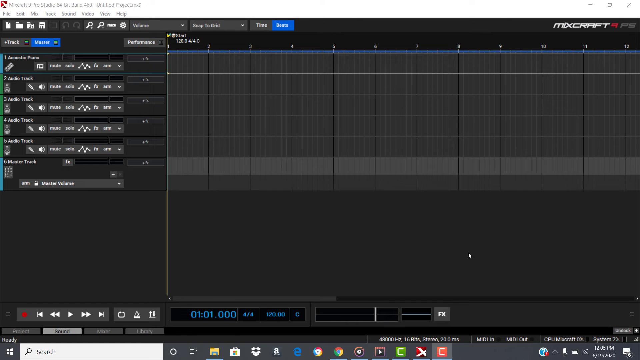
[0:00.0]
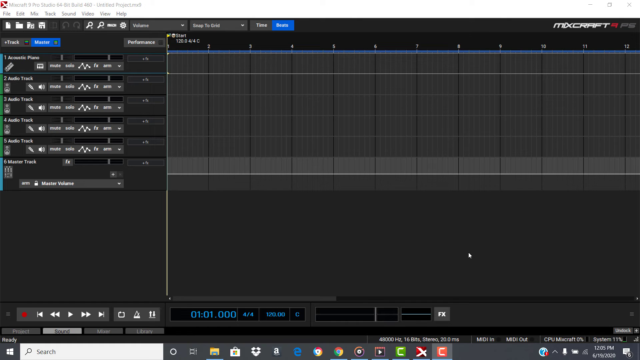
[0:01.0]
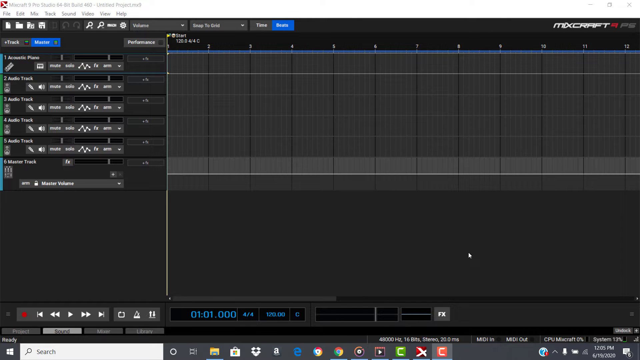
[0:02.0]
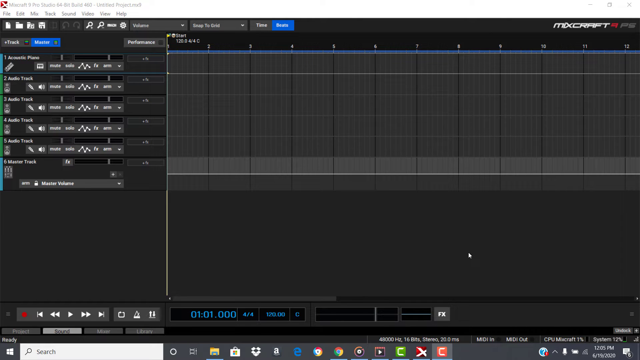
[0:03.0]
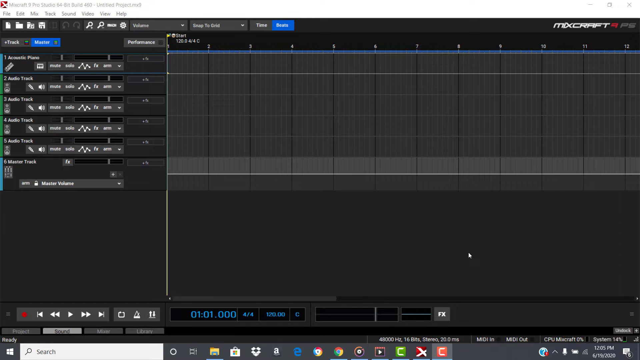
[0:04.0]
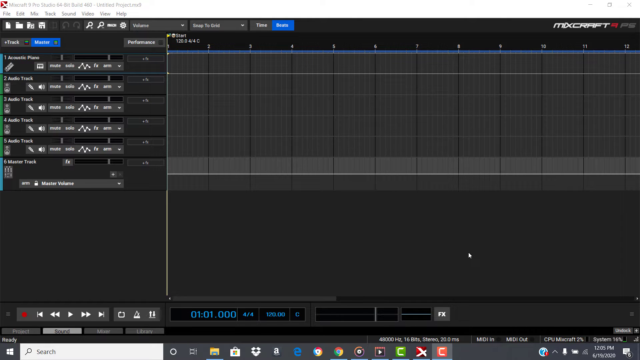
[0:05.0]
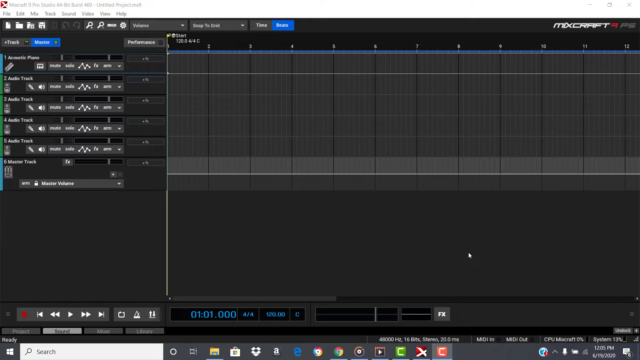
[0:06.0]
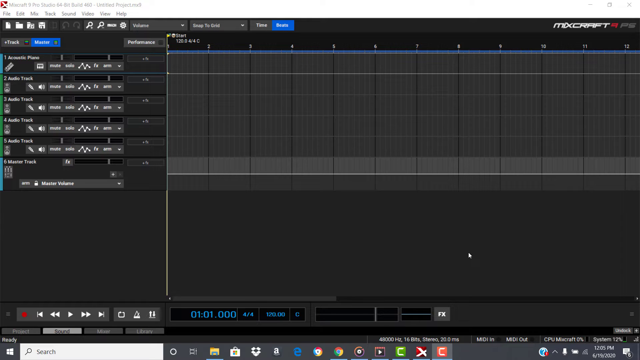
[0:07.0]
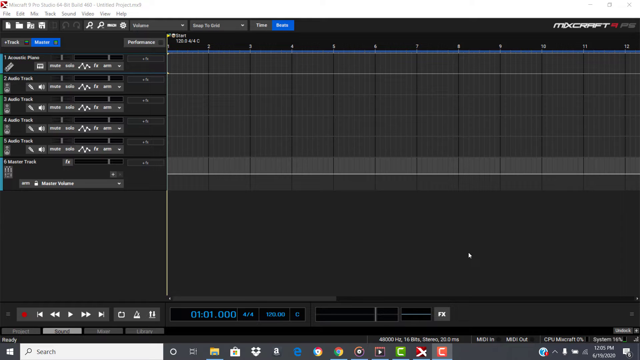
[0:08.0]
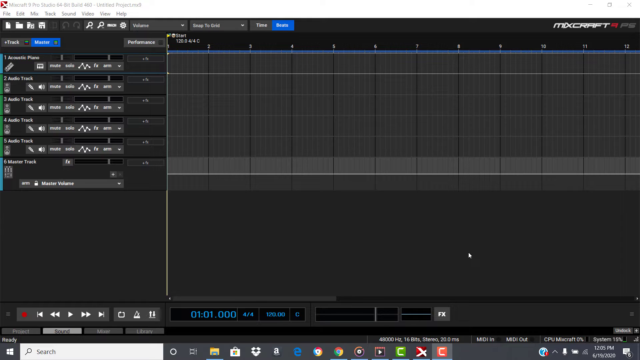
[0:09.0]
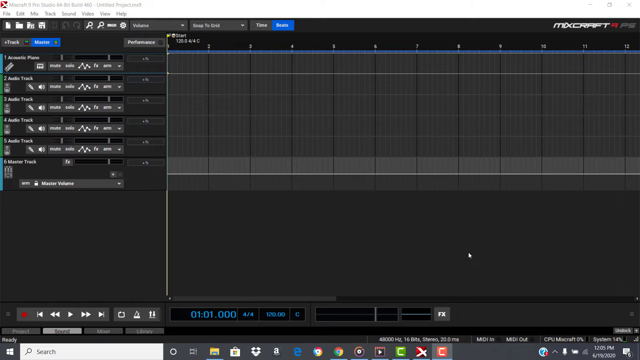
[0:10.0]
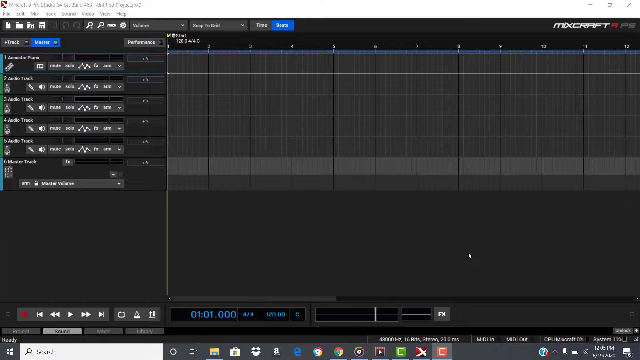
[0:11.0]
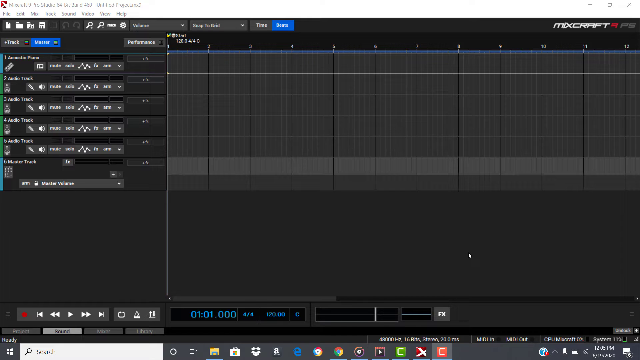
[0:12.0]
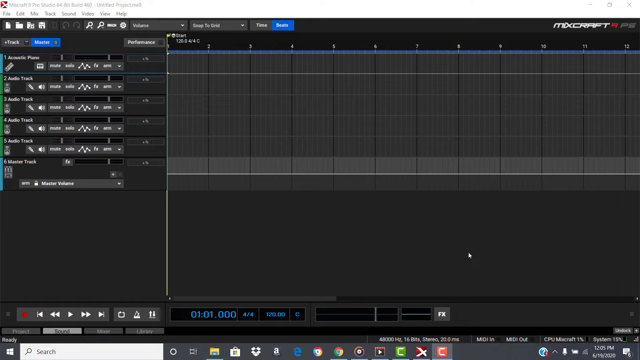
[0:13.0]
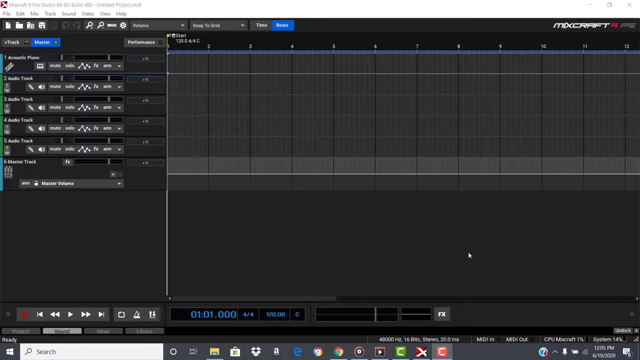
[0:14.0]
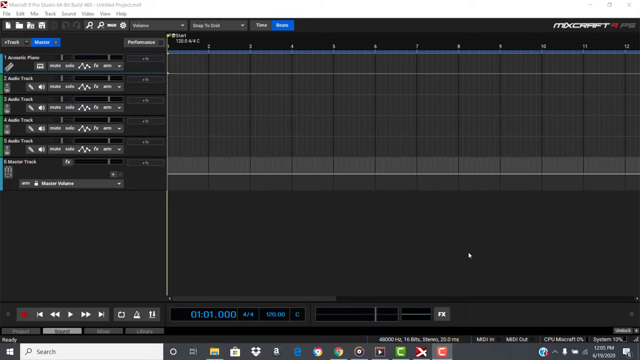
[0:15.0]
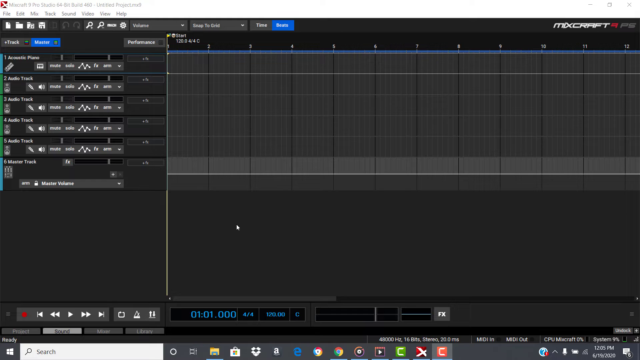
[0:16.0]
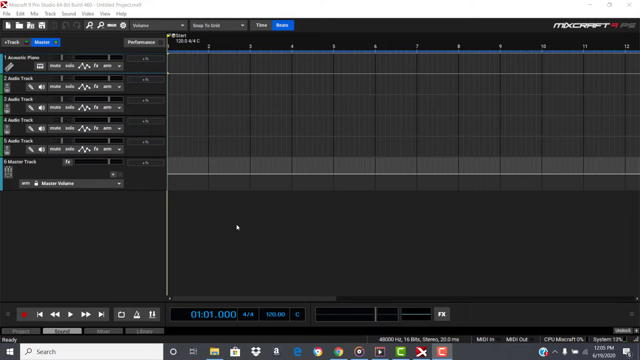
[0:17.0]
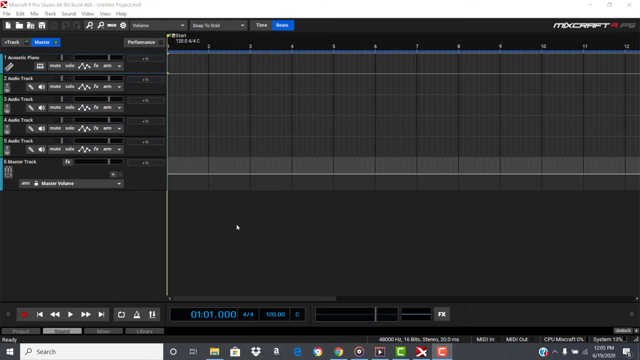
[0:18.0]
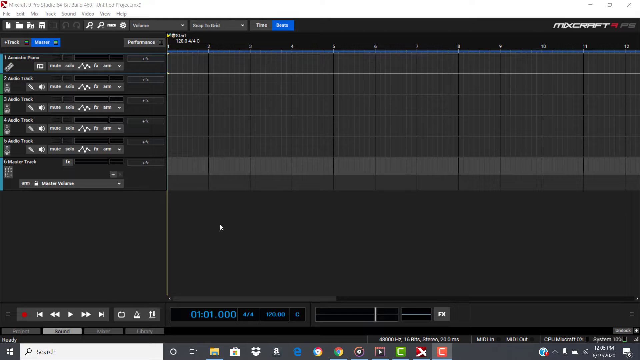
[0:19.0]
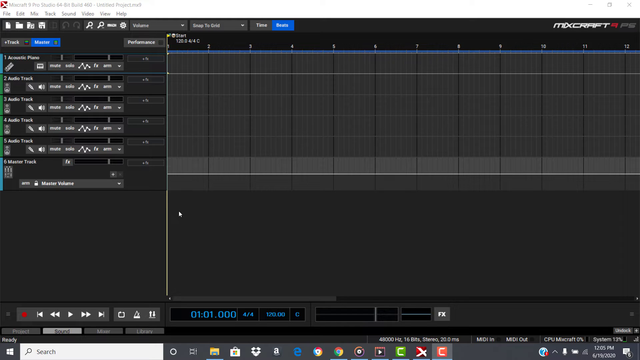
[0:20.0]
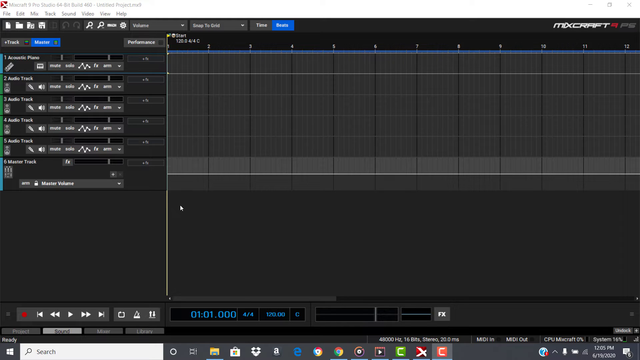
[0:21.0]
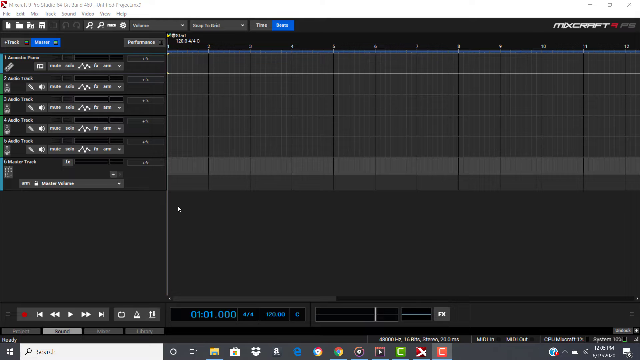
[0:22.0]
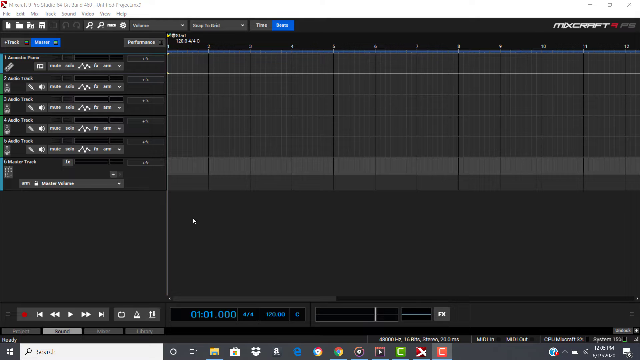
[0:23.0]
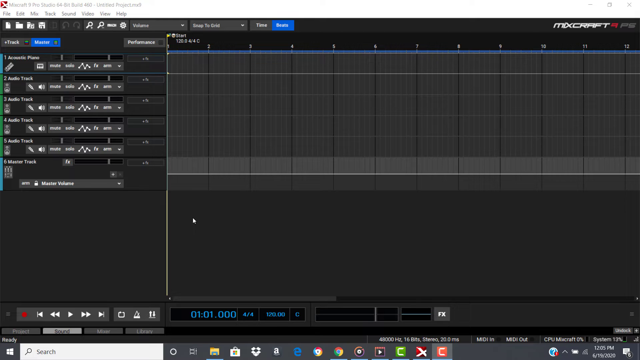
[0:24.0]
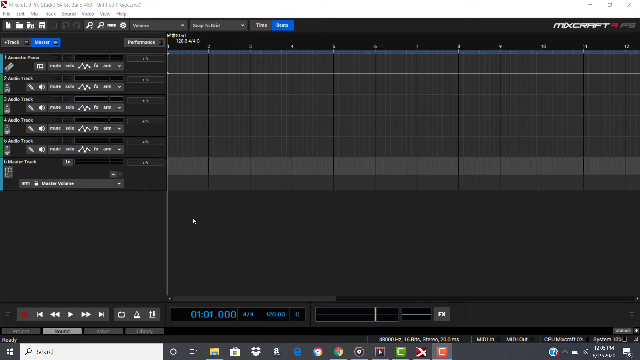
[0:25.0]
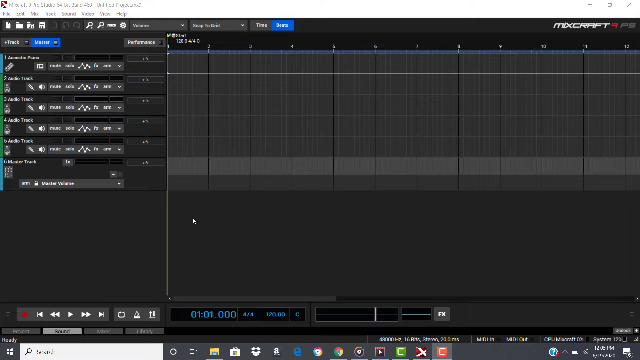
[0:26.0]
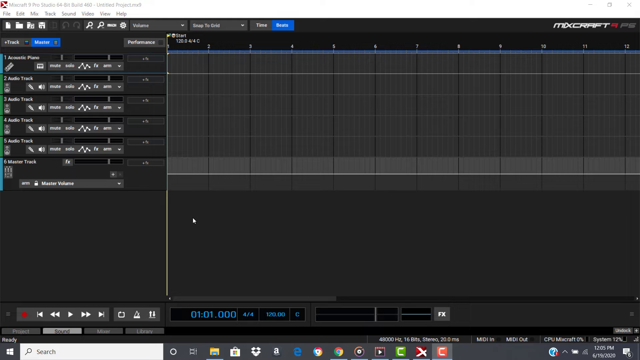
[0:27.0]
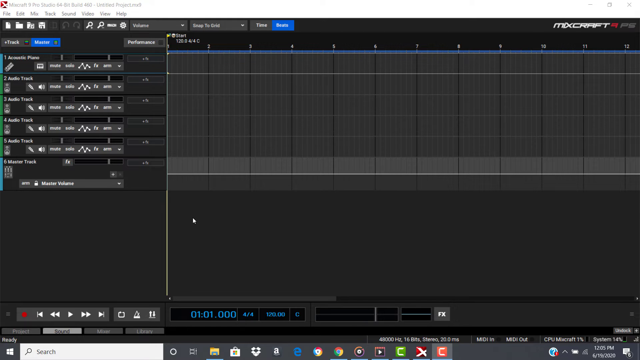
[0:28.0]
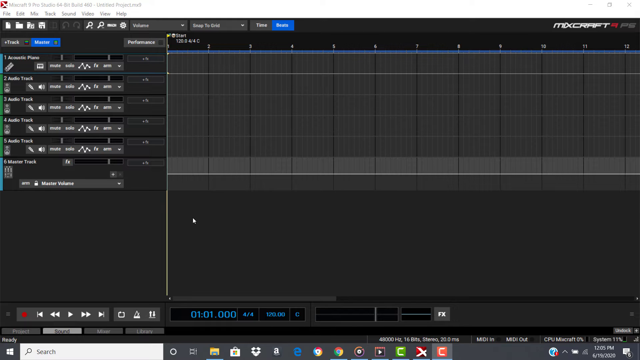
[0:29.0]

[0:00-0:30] A black screen on a computer shows an unidentified piece of software. A mouse cursor starts on the right side and moves over to the left; it hovers and does not seem to be doing much, just kind of moving around the lower portion of the screen. The upper right corner says "MixCraft", so this is apparently software for mixing sound. The screen has rectangular boxes, some buttons and a drop-down menu, but the font is too tiny to read.